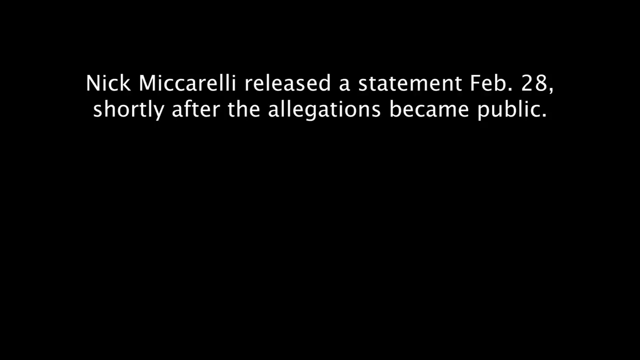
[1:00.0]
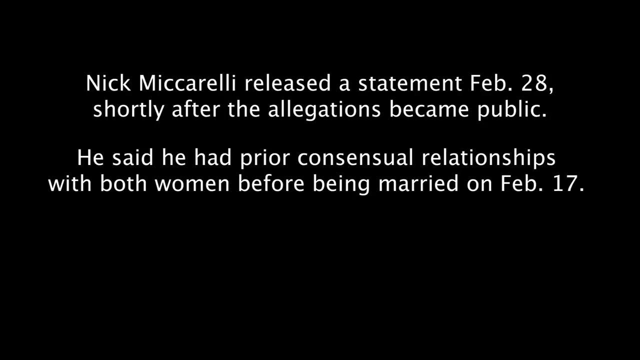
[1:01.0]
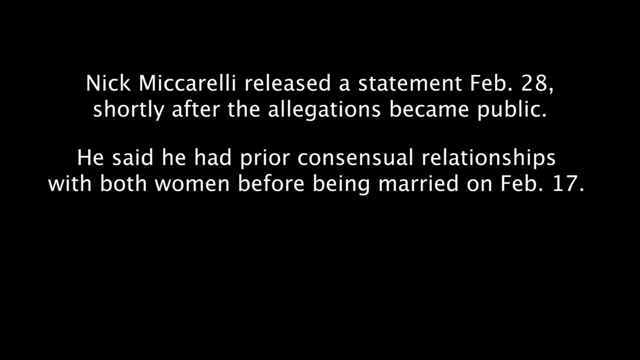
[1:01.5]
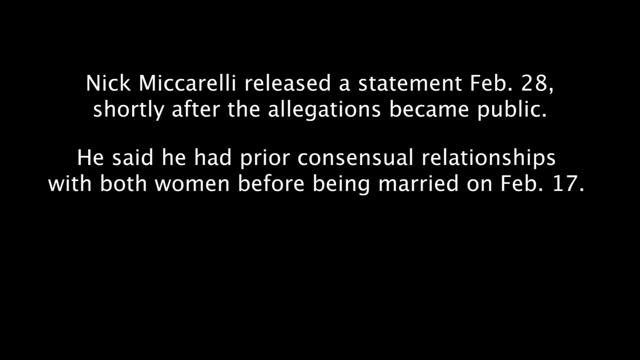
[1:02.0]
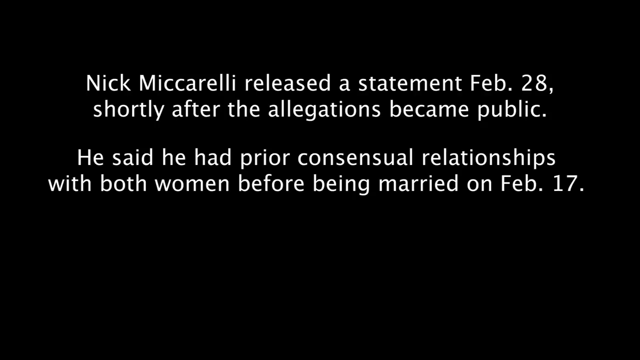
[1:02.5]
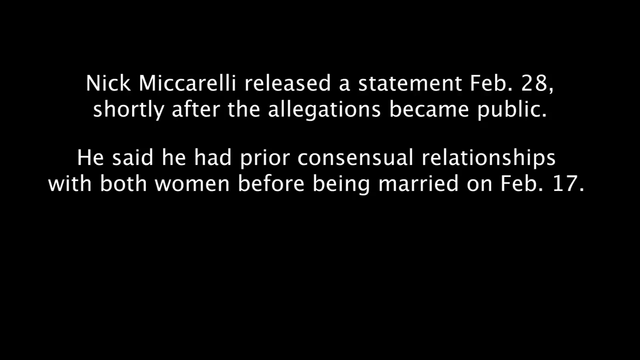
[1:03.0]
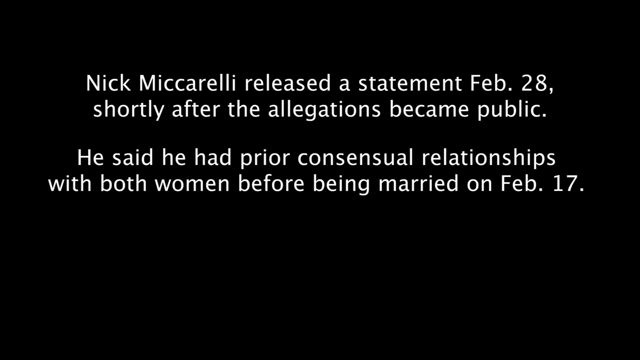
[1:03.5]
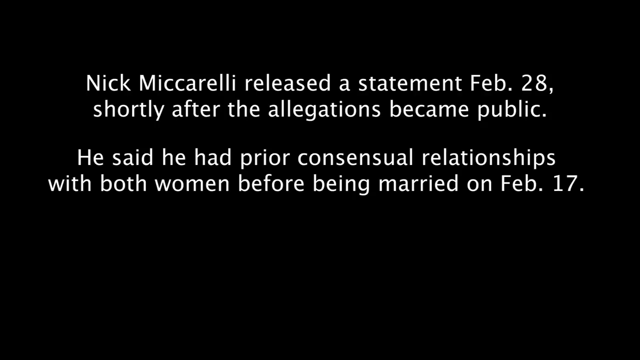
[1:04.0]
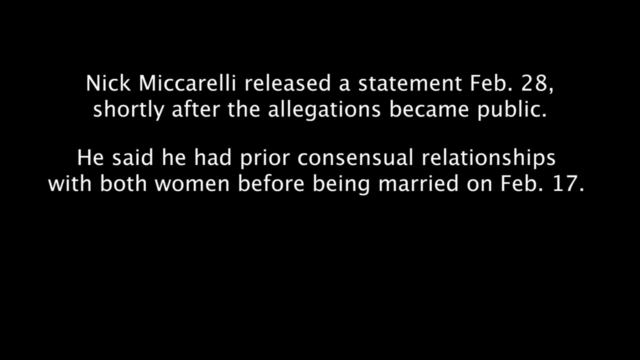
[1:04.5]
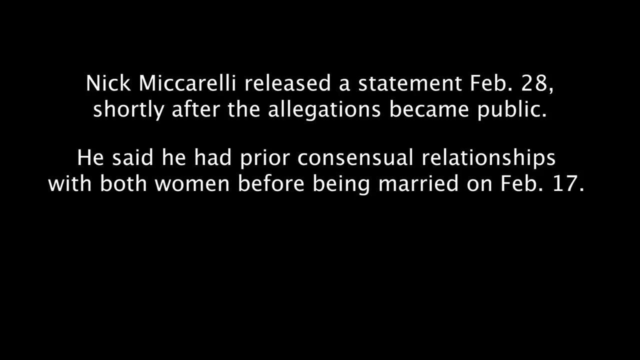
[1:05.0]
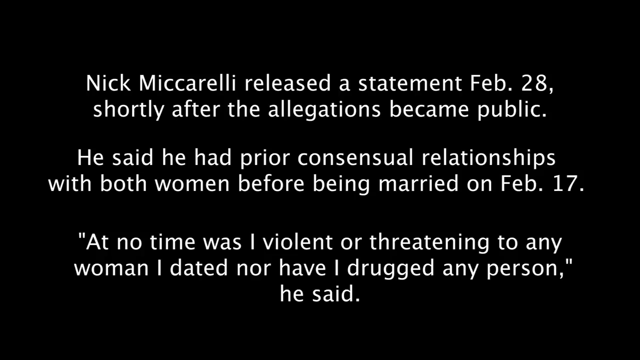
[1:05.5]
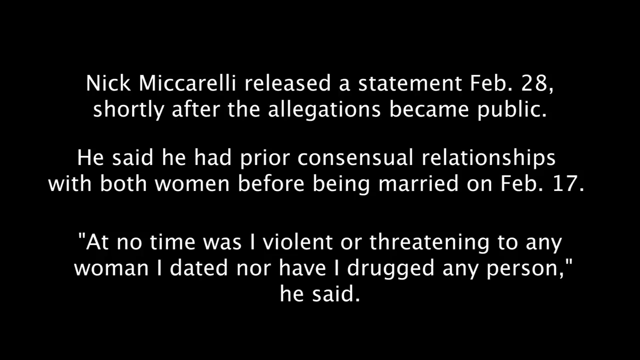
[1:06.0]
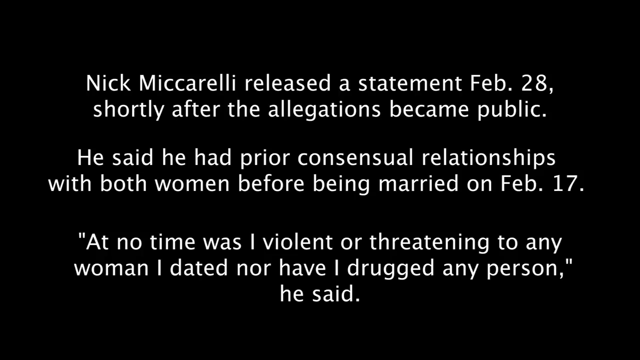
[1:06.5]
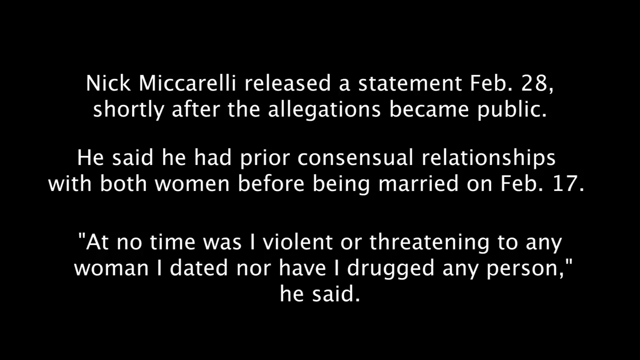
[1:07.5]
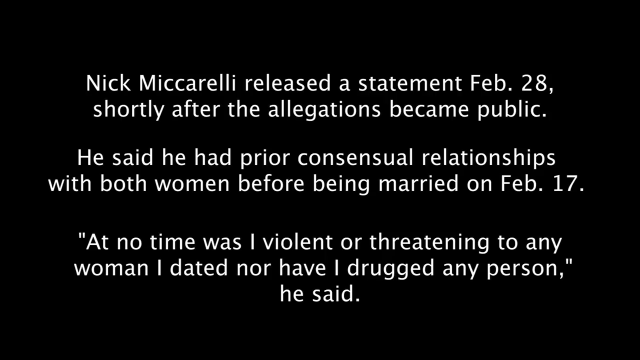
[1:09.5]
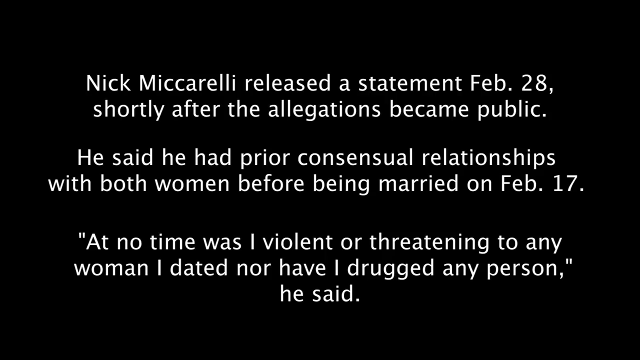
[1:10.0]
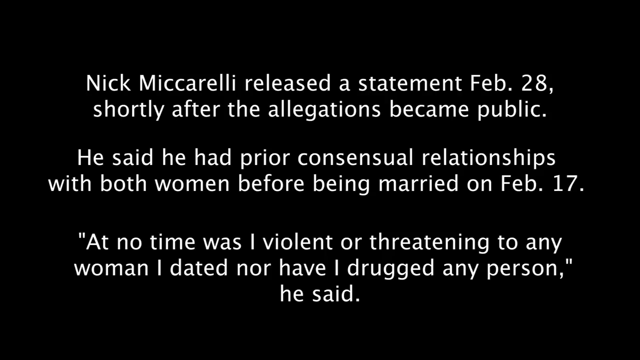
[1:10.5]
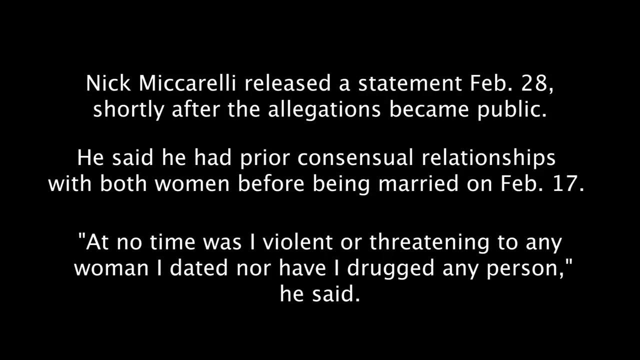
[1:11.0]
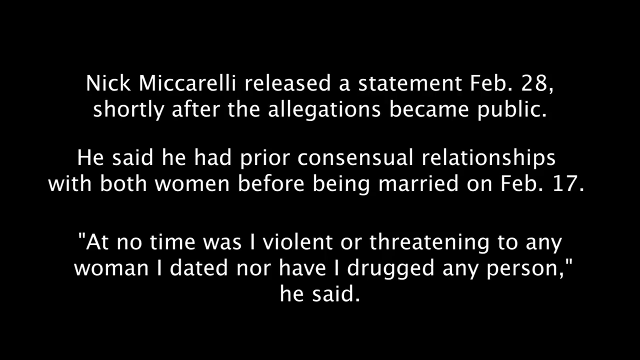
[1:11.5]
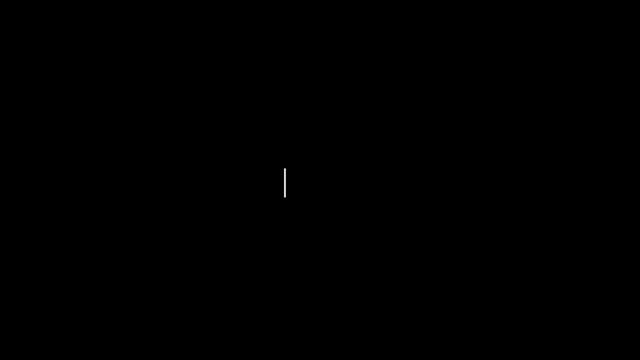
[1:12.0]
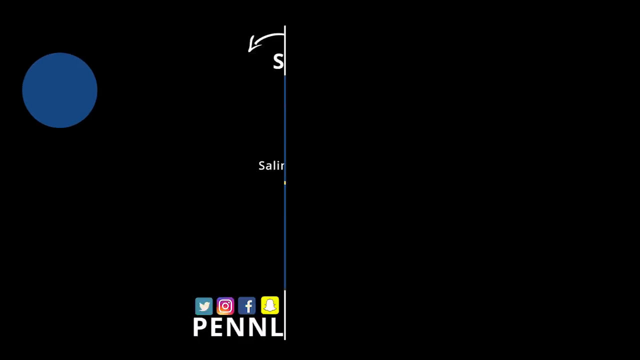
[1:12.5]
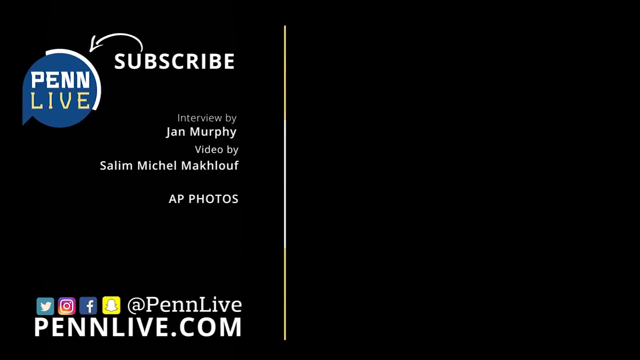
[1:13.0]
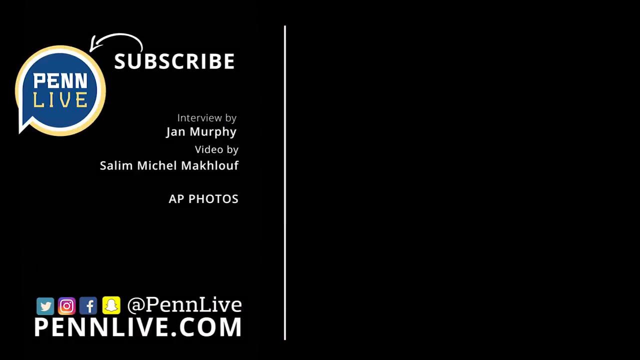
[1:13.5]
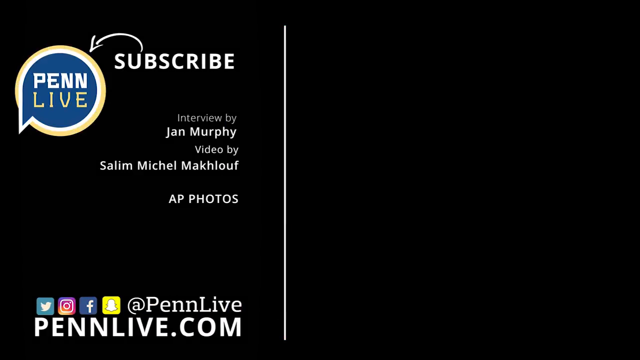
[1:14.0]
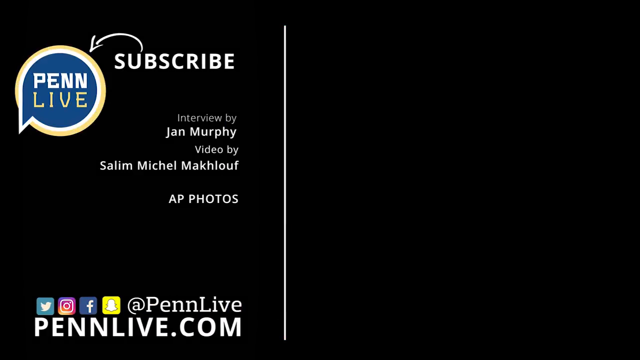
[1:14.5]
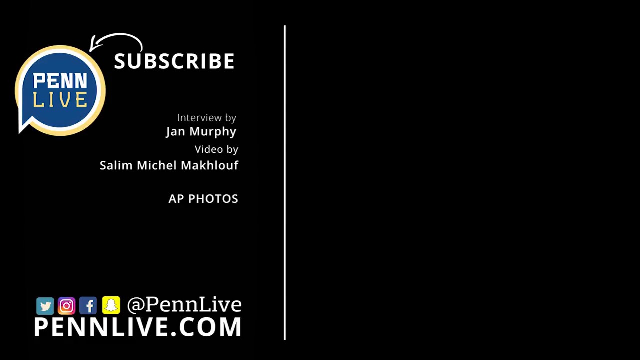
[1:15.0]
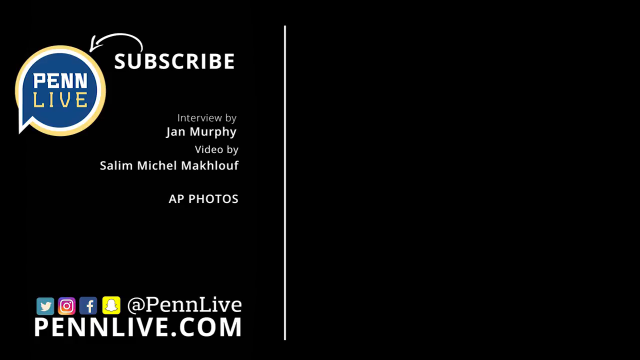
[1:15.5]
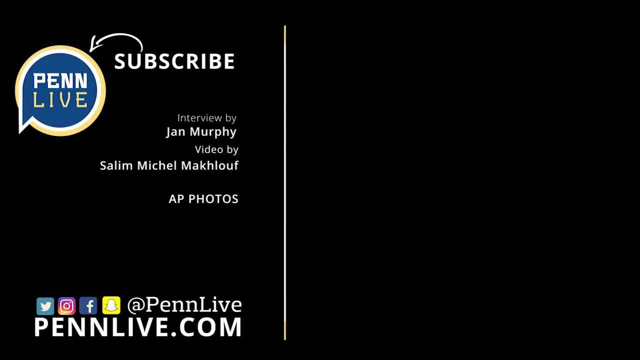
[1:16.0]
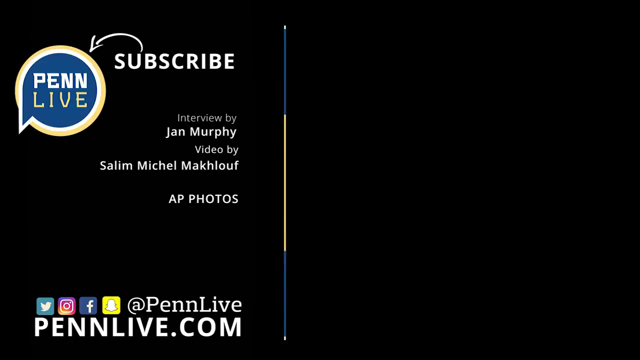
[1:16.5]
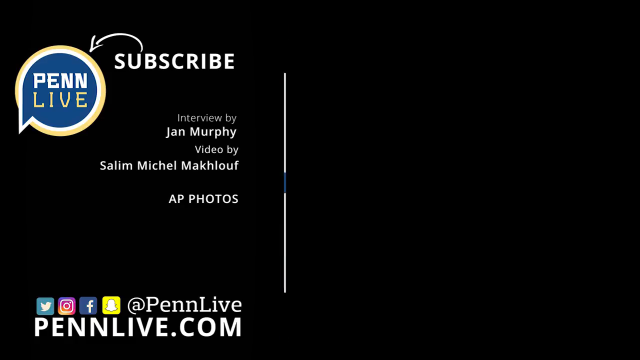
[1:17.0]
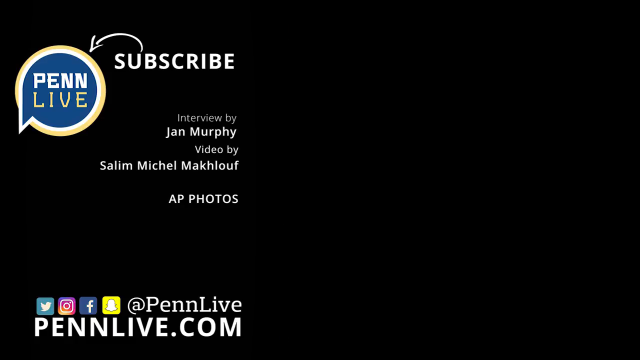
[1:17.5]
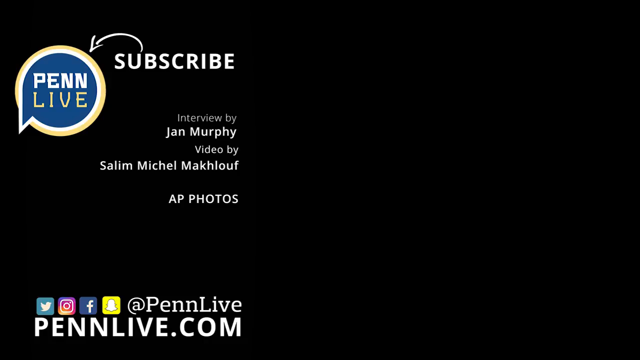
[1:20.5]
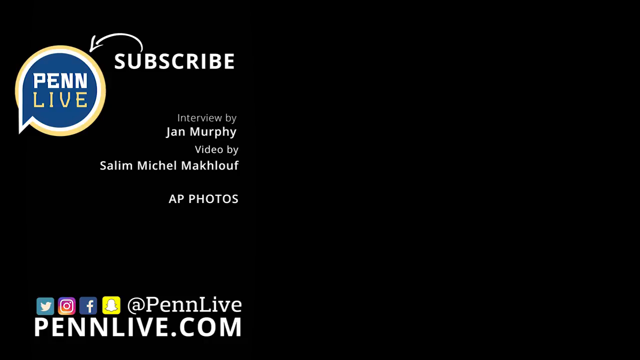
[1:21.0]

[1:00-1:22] Words in white font on a black background report what Nick McCurry said after the allegations: that he had a consensual relationship with both women before being married. The words are from Nick's statement, reporting that at no time was he violent or threatening to any woman he dated, nor would he have drugged any person. A Penn Live logo and "subscribe" appear in the top left corner. The screen gives the name of the interviewer and of the person who filmed the interview, options to subscribe, the social platforms where it can be accessed (Twitter, Instagram, Facebook and Snapchat), and where it was recorded.